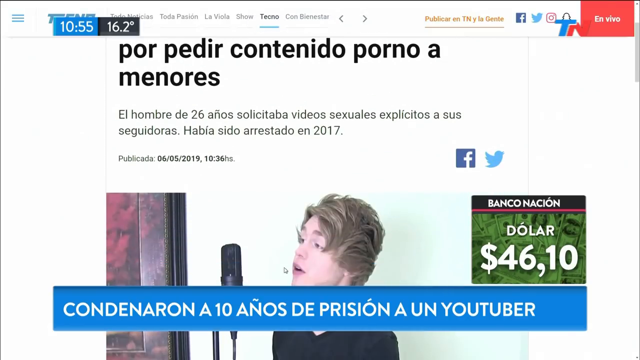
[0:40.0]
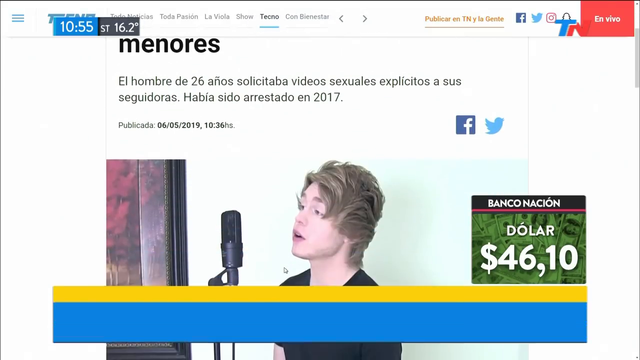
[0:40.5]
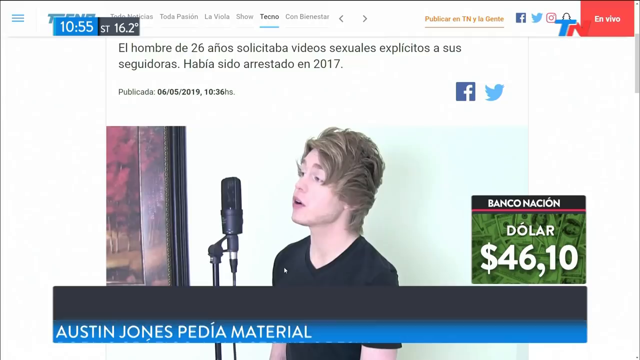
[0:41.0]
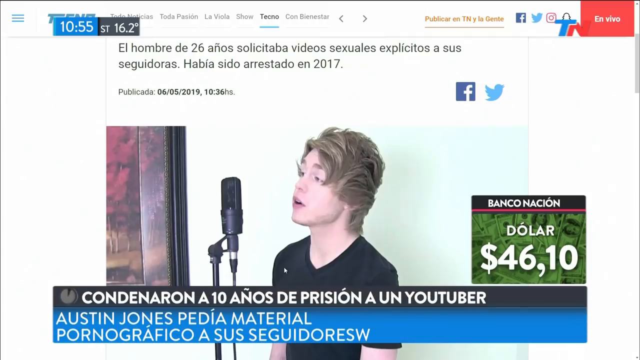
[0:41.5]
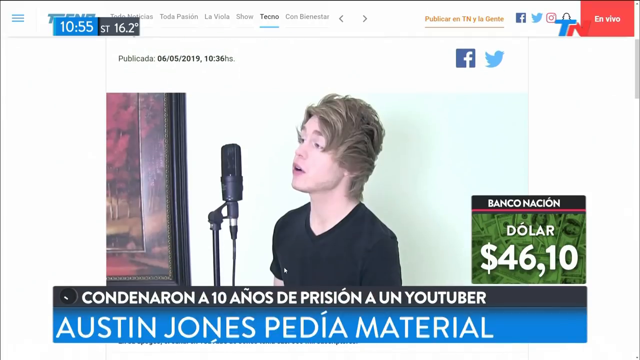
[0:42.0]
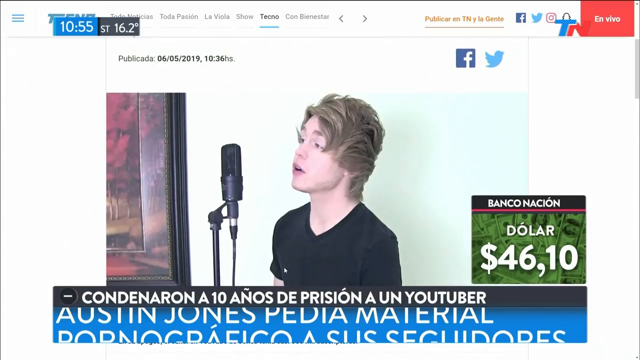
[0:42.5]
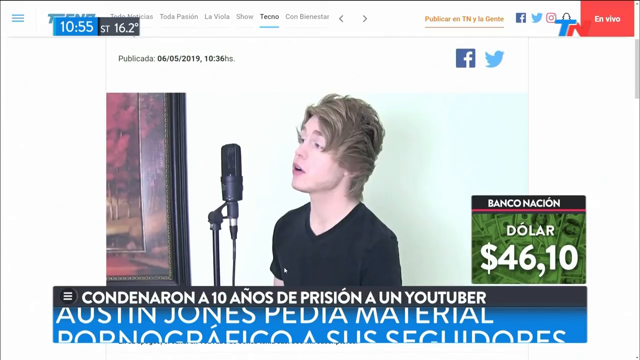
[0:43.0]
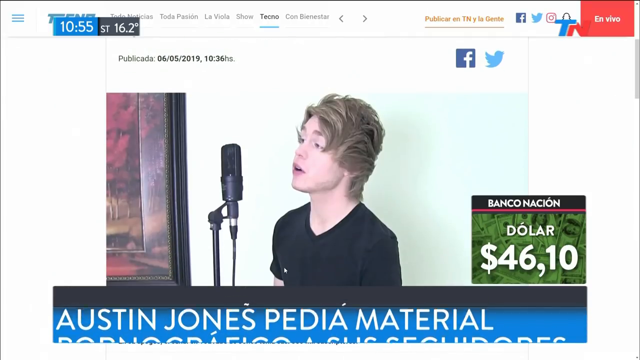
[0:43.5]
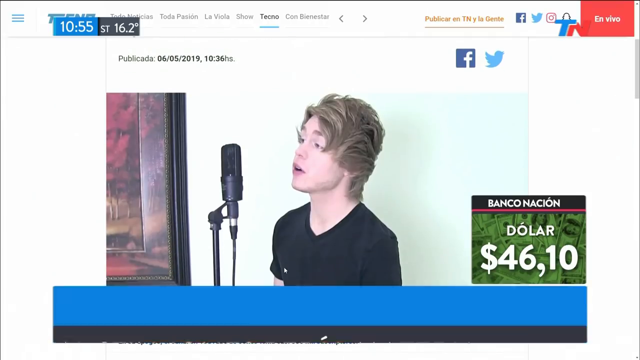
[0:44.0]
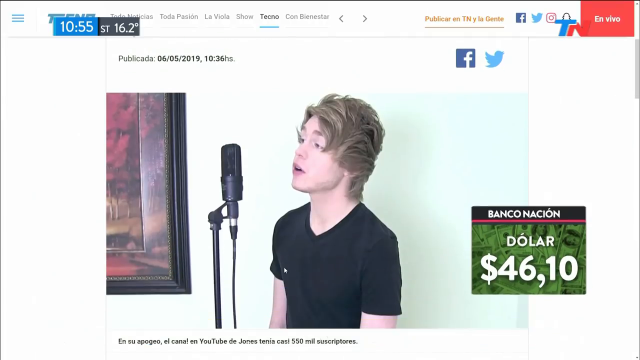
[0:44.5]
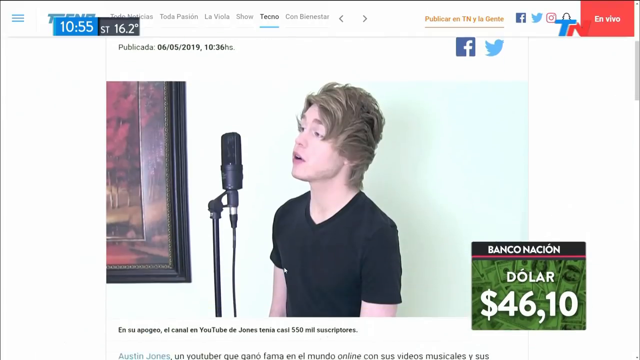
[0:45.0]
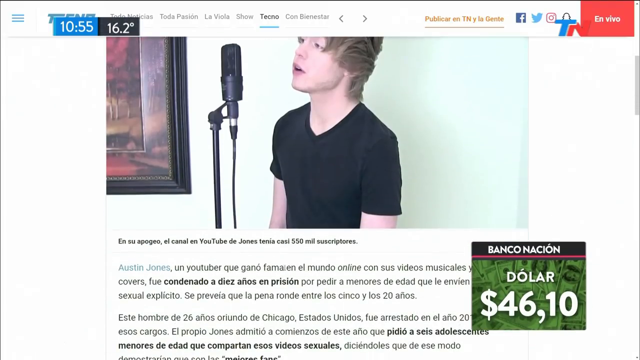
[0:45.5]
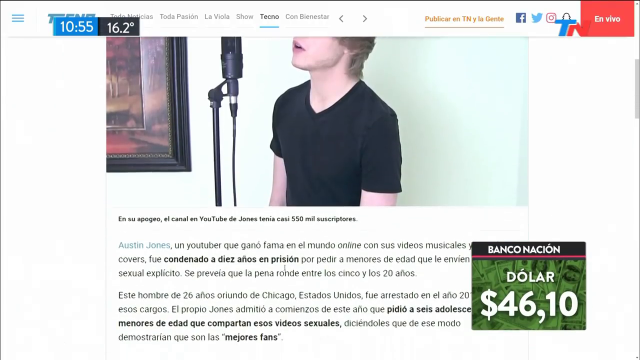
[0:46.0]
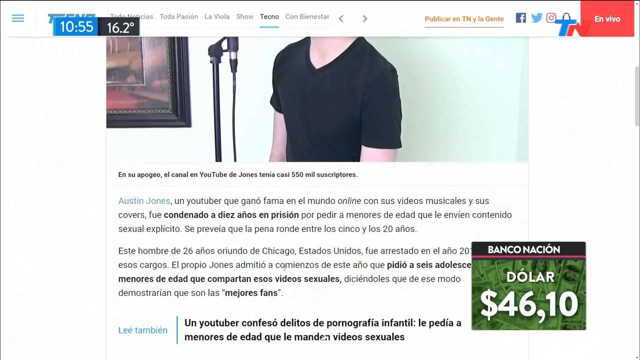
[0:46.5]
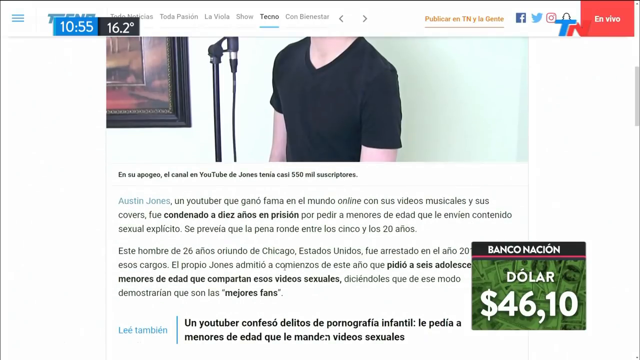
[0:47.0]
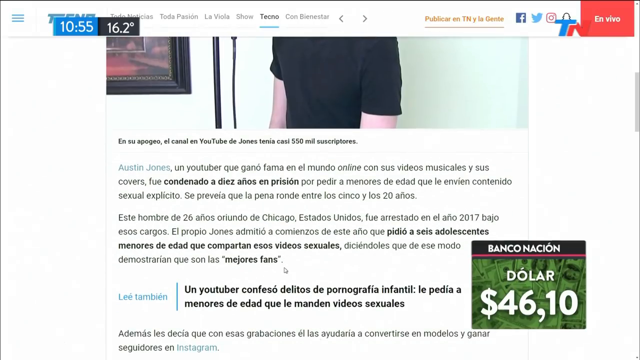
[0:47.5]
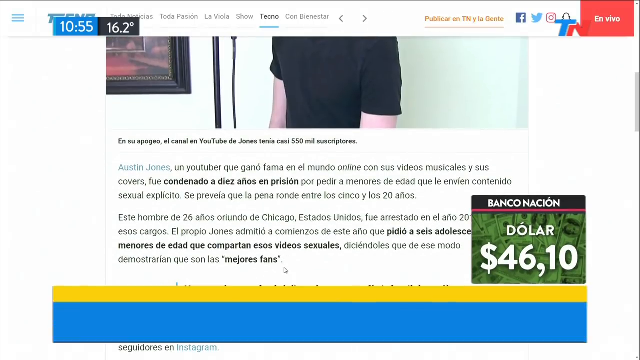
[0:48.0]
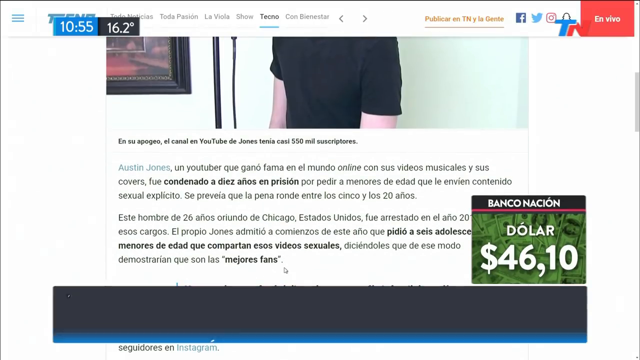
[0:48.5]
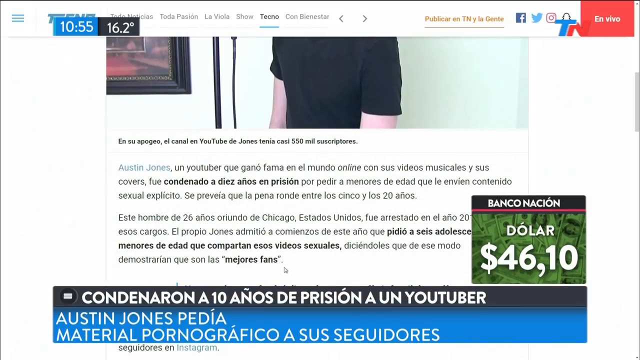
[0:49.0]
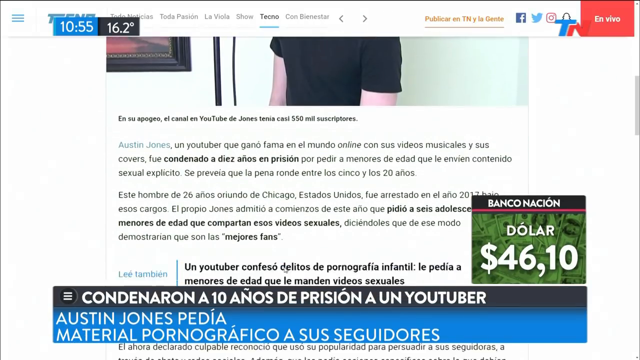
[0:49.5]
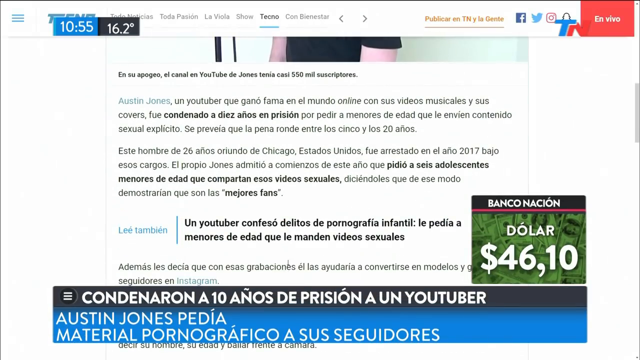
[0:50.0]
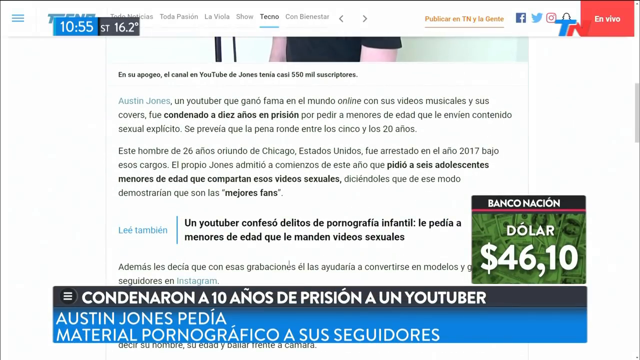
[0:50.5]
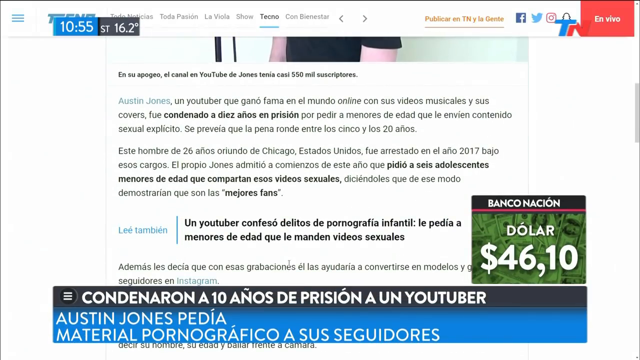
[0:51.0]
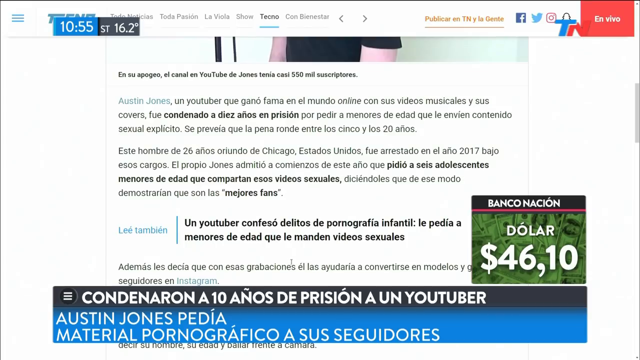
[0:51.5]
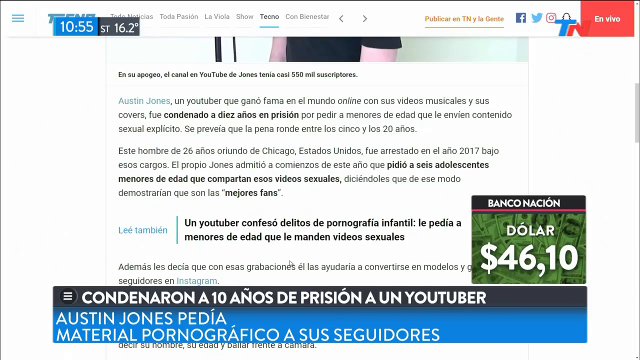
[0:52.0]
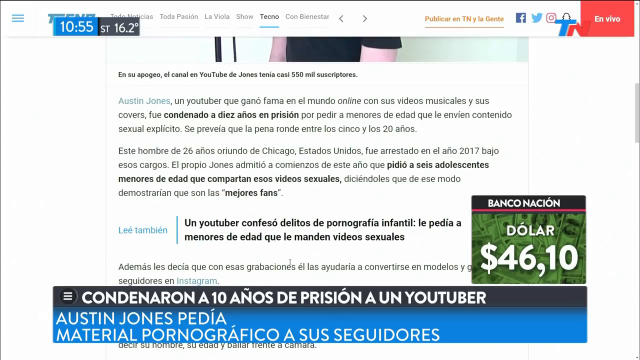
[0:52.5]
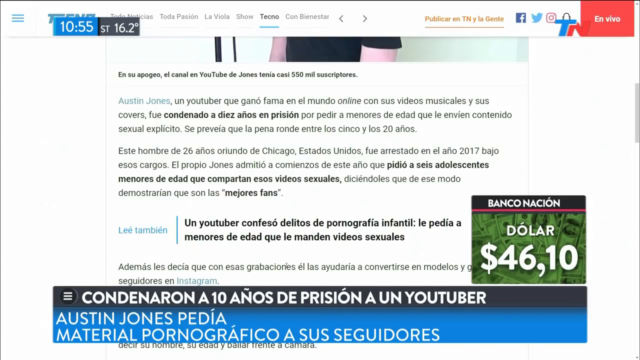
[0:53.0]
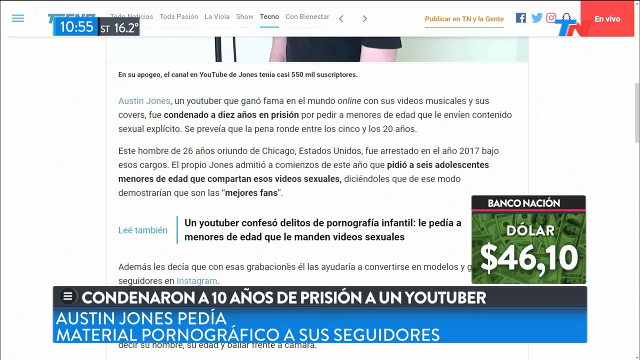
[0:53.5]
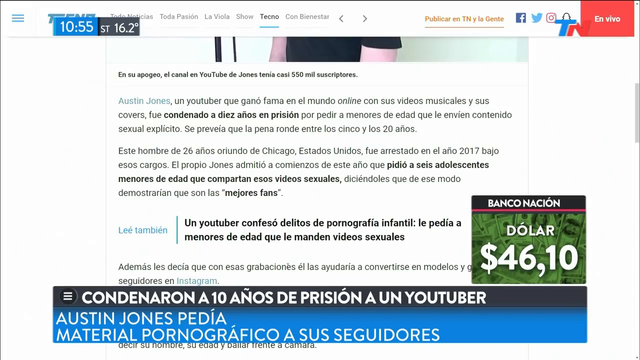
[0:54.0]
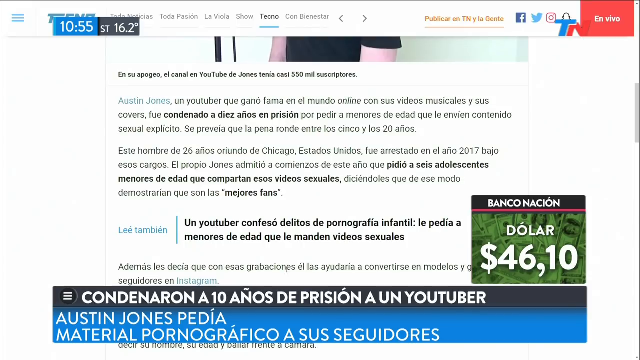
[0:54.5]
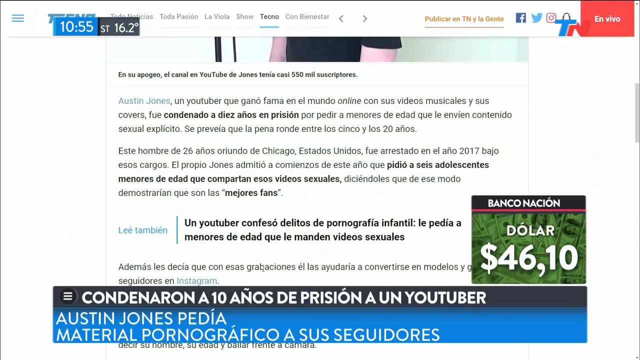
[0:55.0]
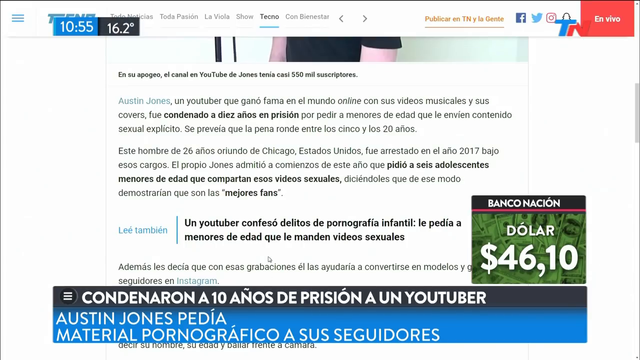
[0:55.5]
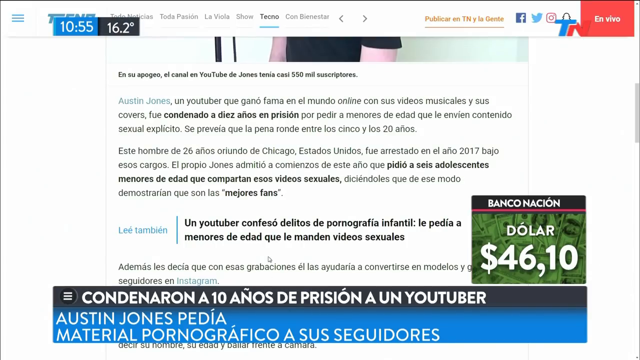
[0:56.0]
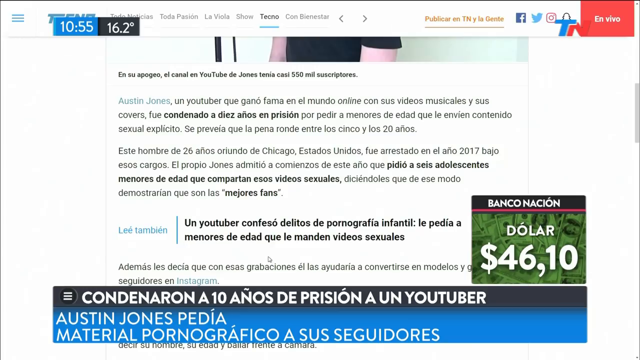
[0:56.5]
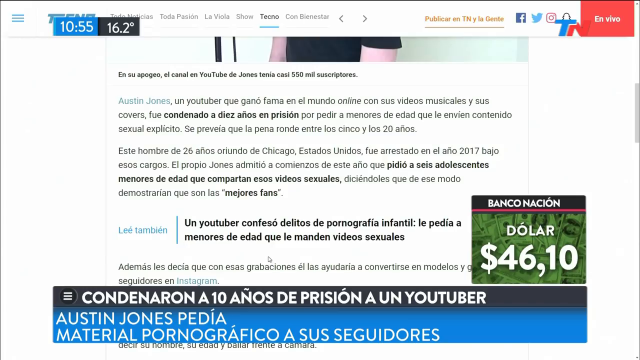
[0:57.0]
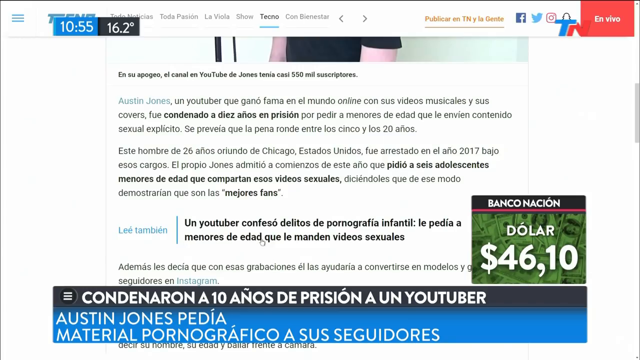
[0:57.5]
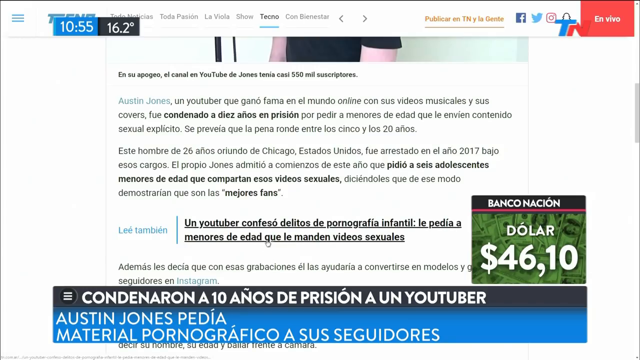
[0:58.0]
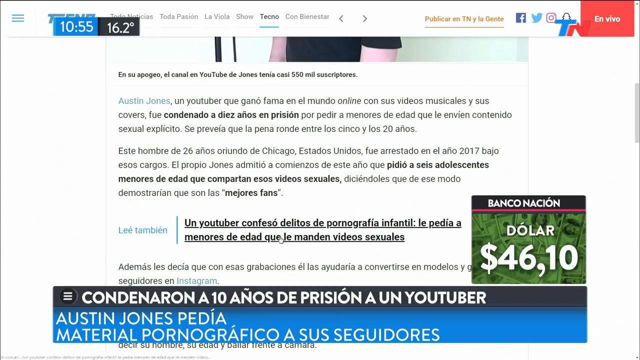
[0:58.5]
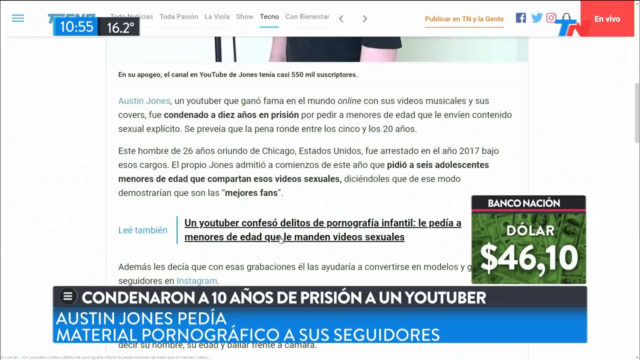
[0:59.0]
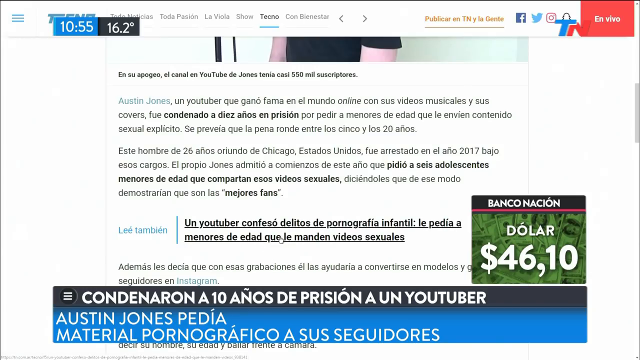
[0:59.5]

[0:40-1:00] The news segment brings up a web page about a YouTuber who was sentenced to prison, apparently the YouTuber Austin Jones. A banner at the bottom of the screen carries Spanish text that includes the words "prison" and "un YouTuber." The newscaster is talking while the page is shown, and the page scrolls down. In the lower right corner is the Banco Nacion dollar, $46.10, and in the upper left corner the time reads 10:55 with a temperature of 16.2 degrees. Eventually the YouTuber appears on the page: he is blonde, faces to the left, and has a microphone right in front of him.